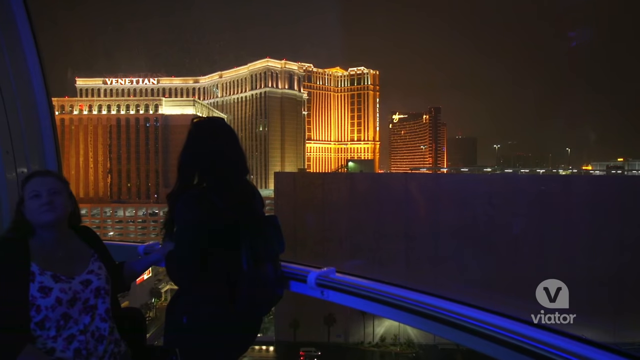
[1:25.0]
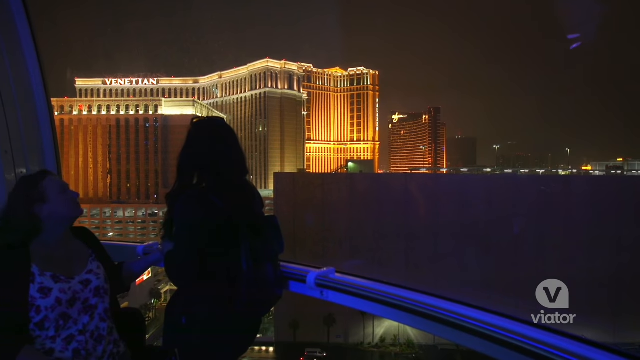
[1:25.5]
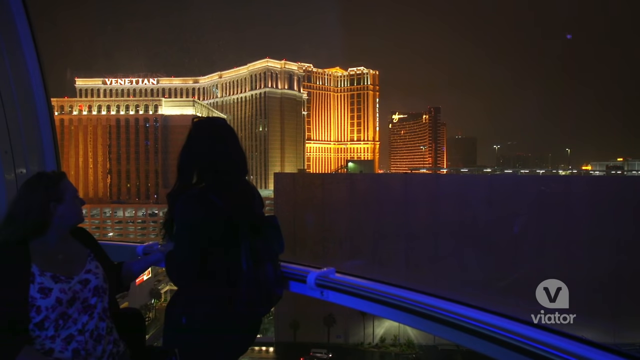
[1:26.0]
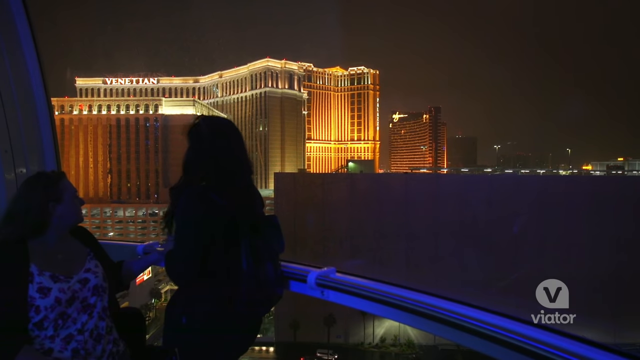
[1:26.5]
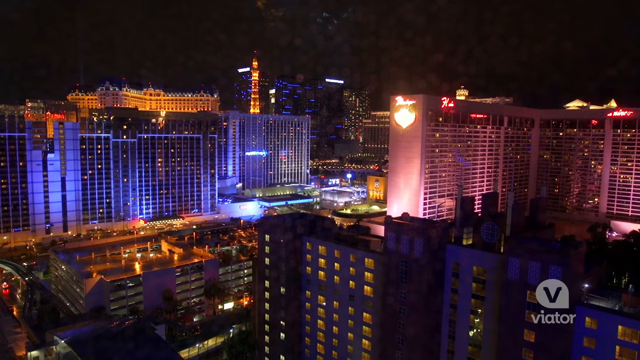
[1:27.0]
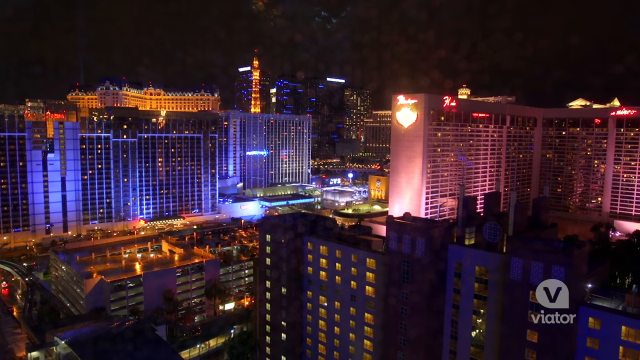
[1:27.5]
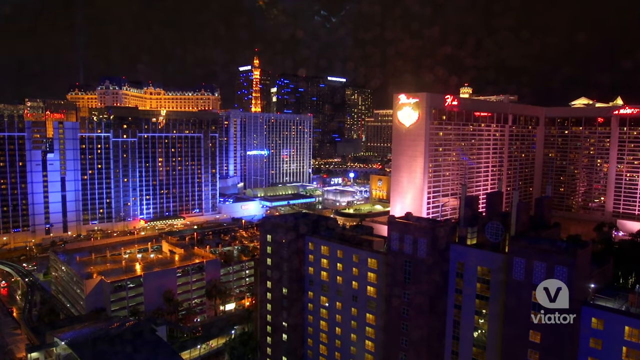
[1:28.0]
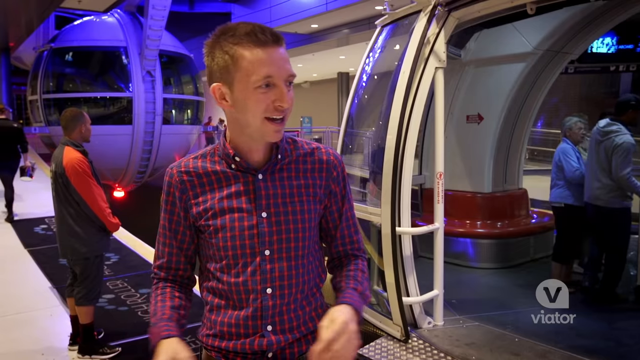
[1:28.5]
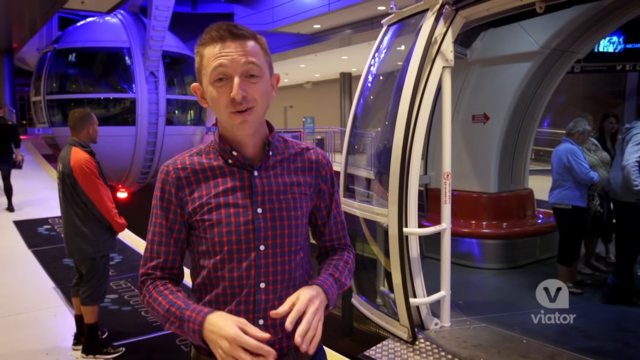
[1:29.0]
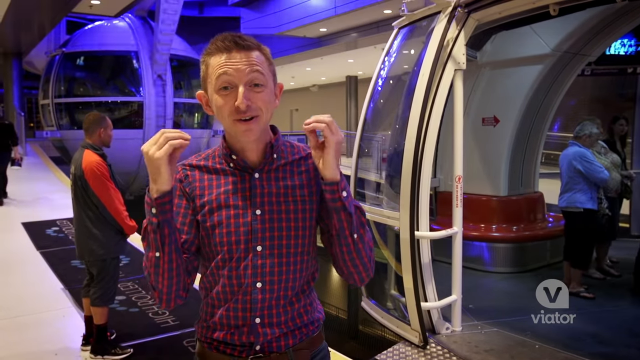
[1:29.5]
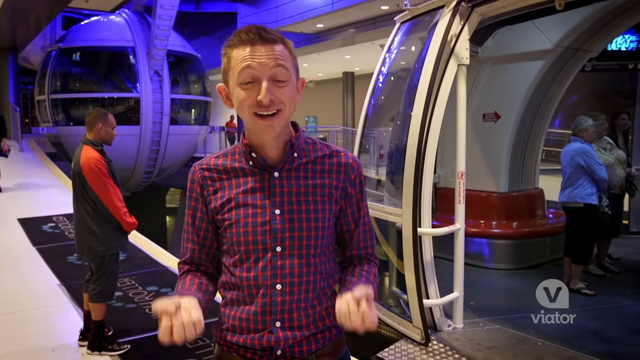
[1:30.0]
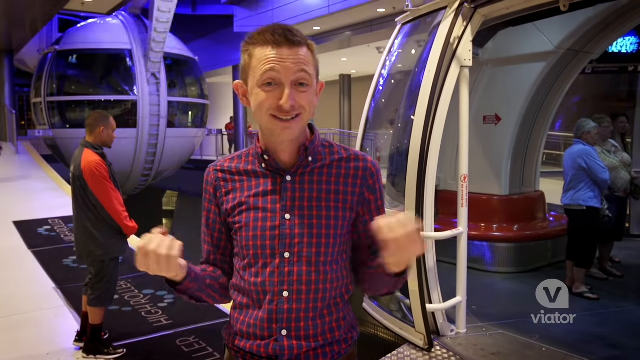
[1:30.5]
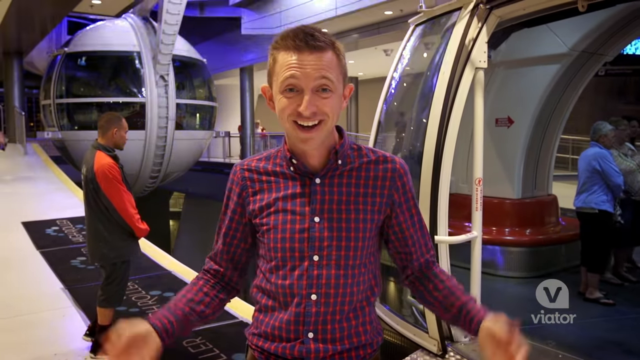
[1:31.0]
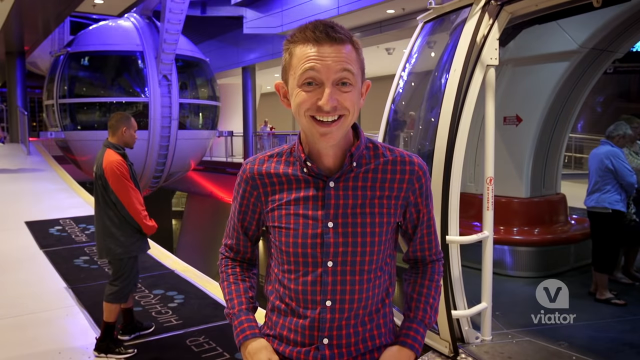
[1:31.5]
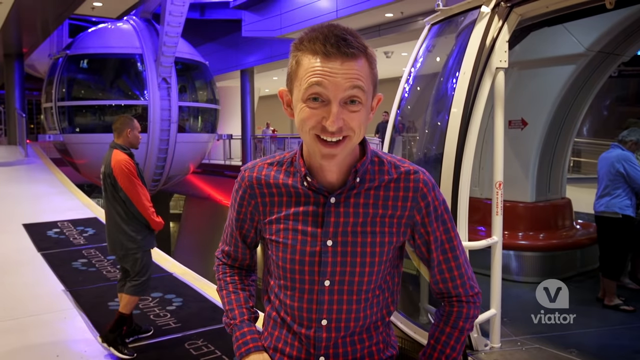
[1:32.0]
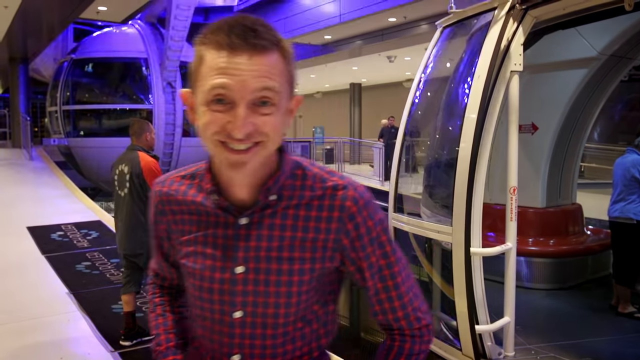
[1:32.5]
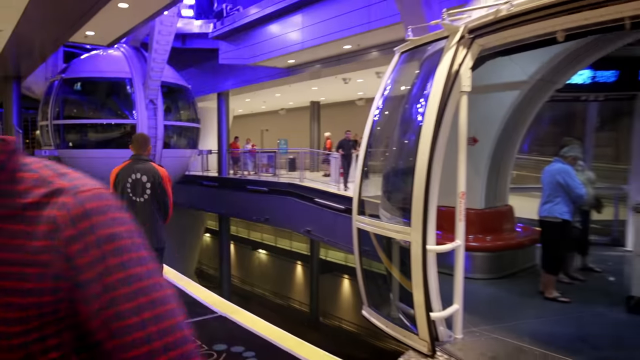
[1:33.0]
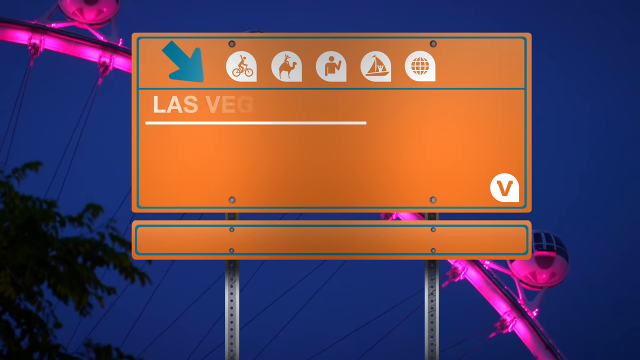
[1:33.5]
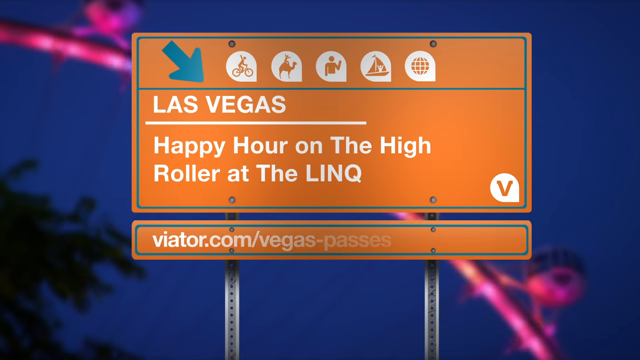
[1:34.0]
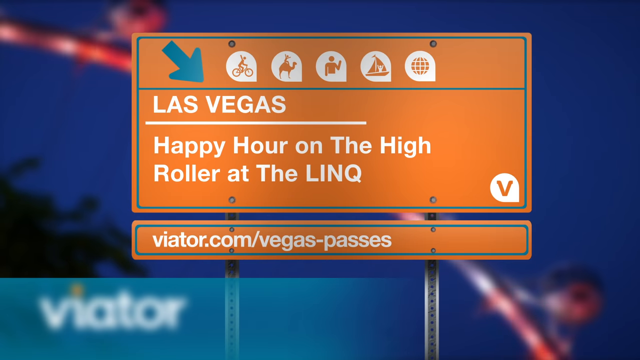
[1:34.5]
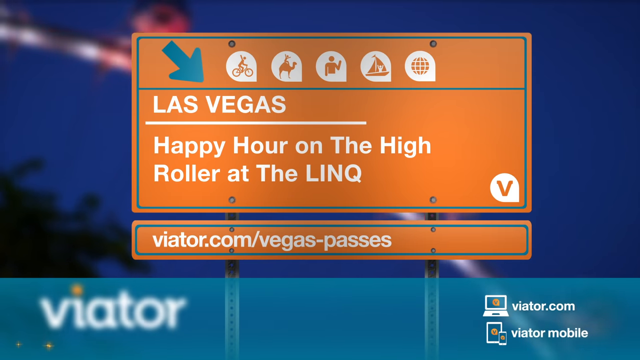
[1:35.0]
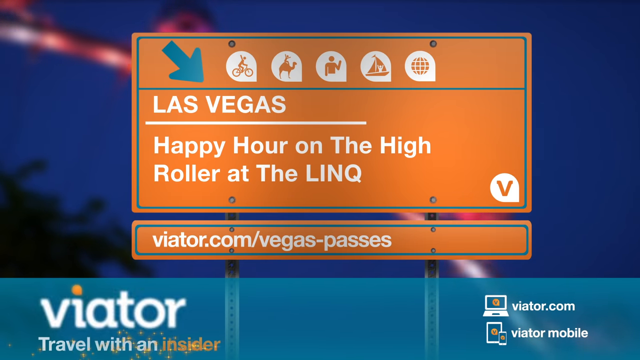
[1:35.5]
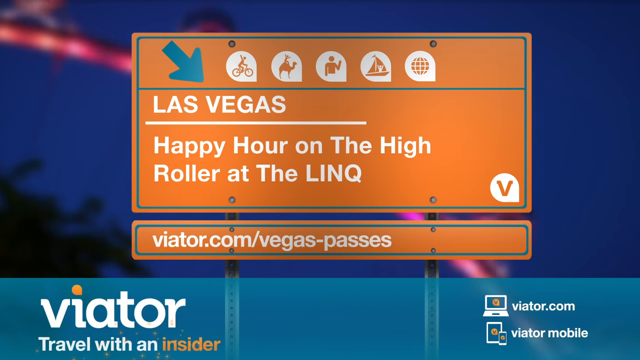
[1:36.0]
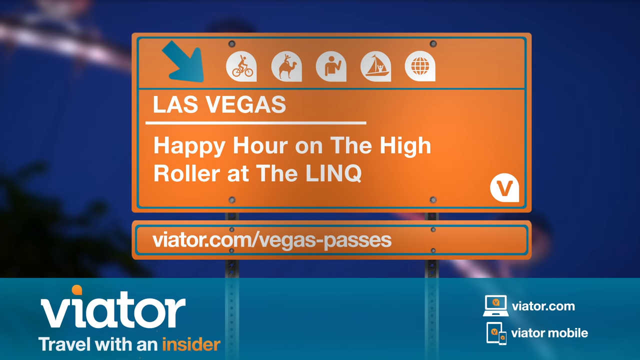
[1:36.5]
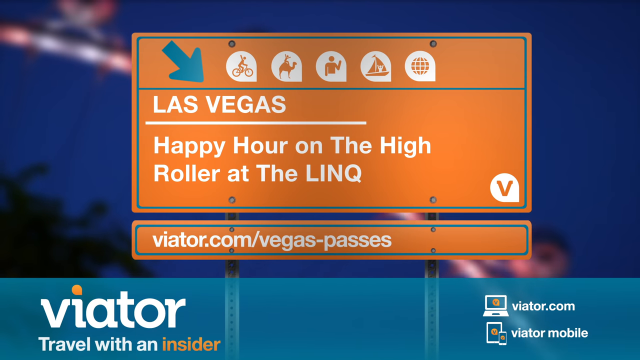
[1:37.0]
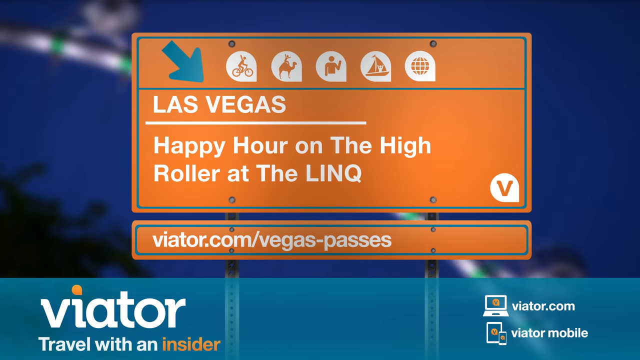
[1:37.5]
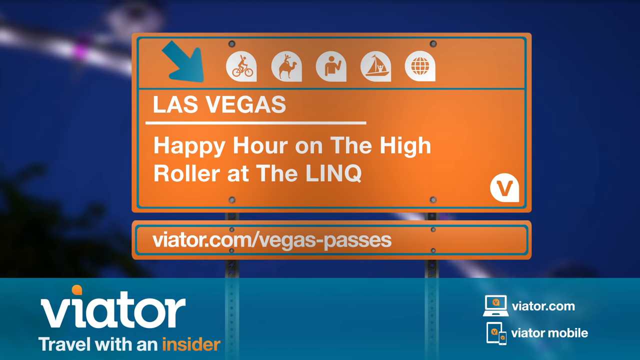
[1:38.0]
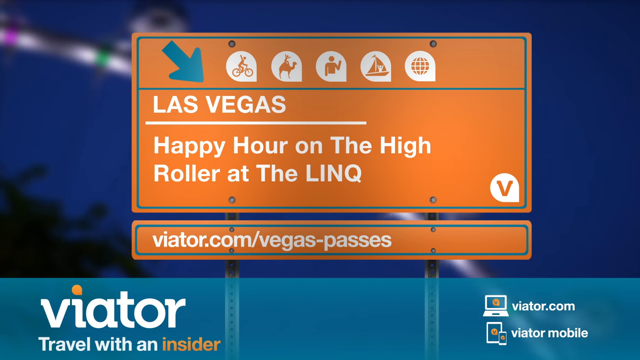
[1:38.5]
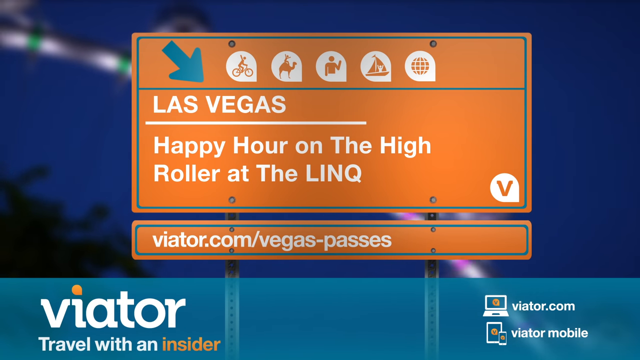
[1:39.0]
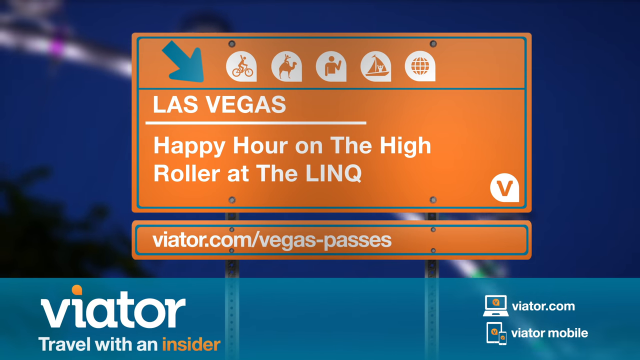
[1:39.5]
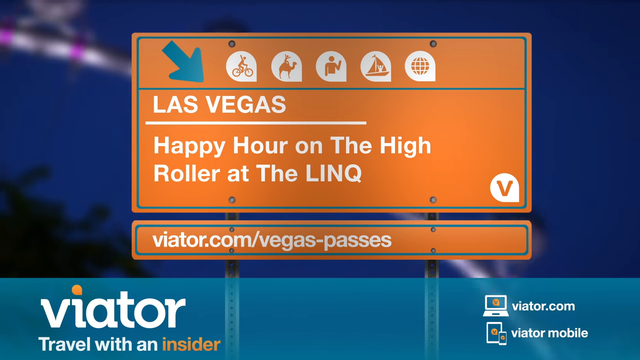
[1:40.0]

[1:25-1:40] A woman is silhouetted against a backdrop of what must be the Venetian, the name superimposed on the top of the building. Other areas that appear to be in Las Vegas are also visible. The excited man in his gingham and black shirt smiles and gestures, seemingly indicating the orbed rides that people can fit inside. A screen displays a sign reading "Las Vegas," with a teal arrow above it pointing downwards and to the right, and the text "happy hour on the high roller at the LINQ," suggesting the ride is called the High Roller at the LINQ.